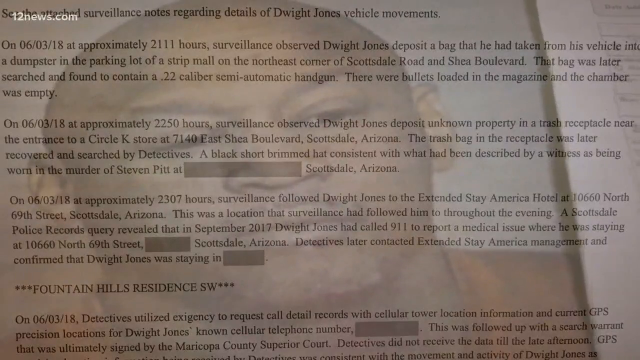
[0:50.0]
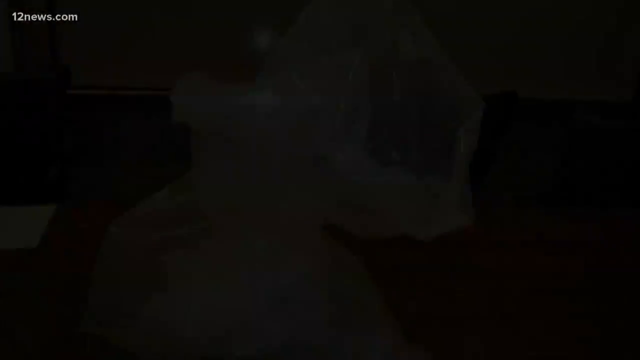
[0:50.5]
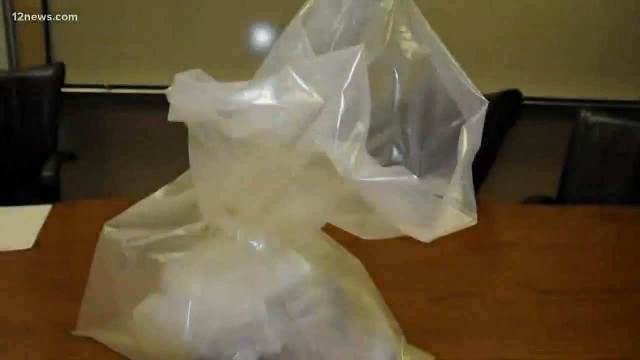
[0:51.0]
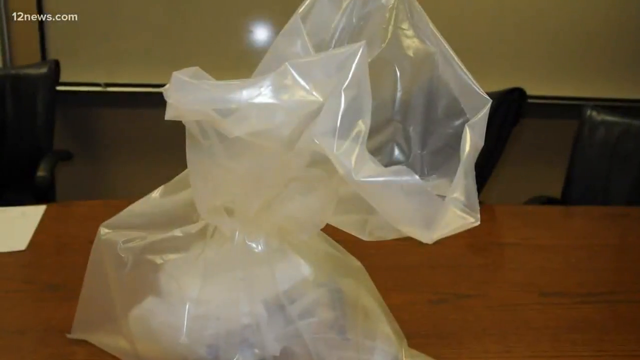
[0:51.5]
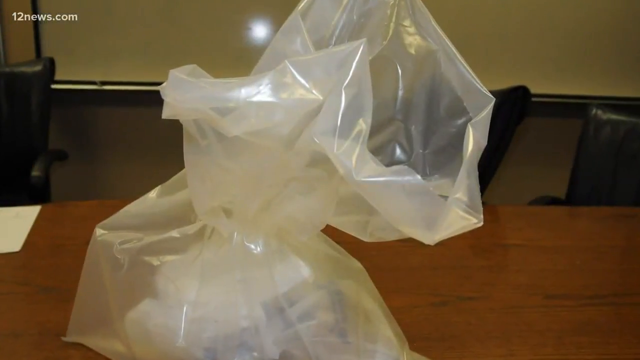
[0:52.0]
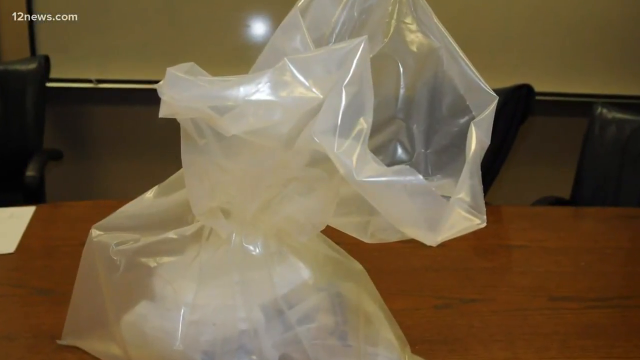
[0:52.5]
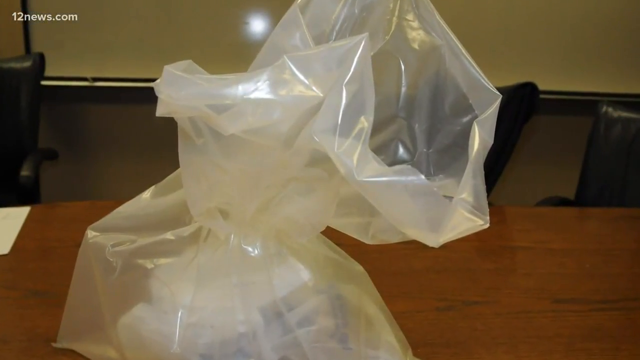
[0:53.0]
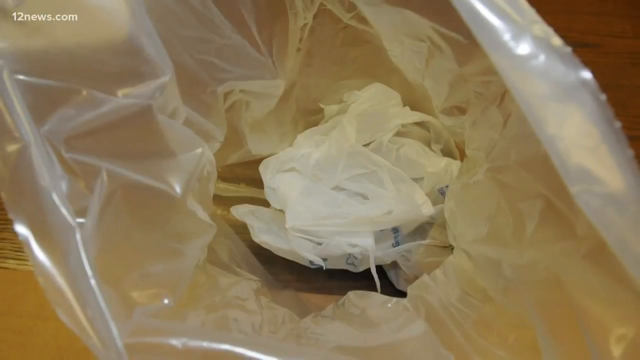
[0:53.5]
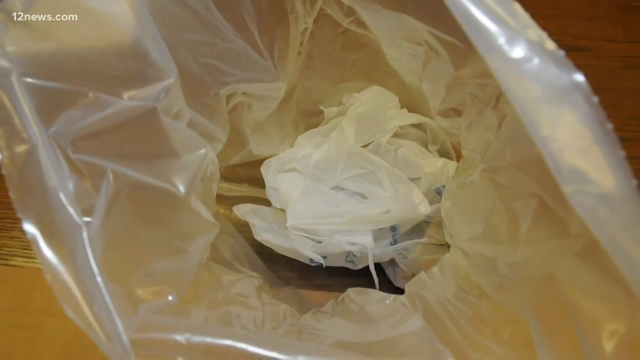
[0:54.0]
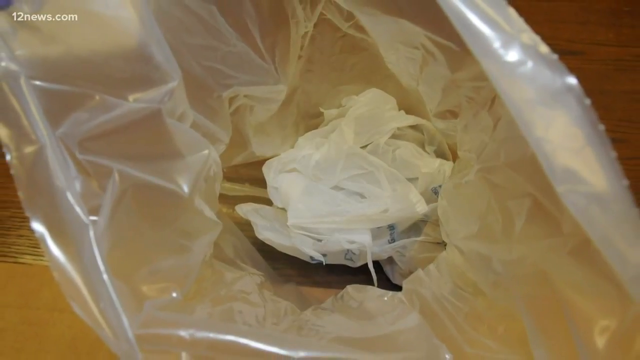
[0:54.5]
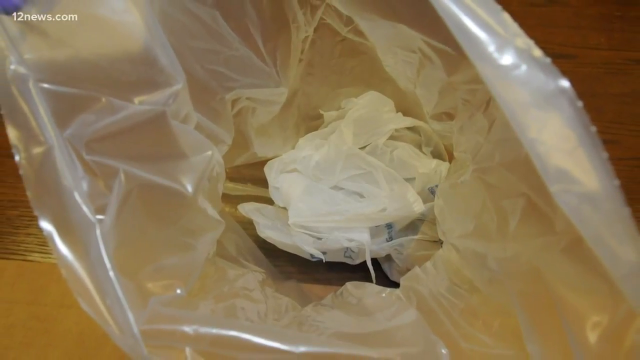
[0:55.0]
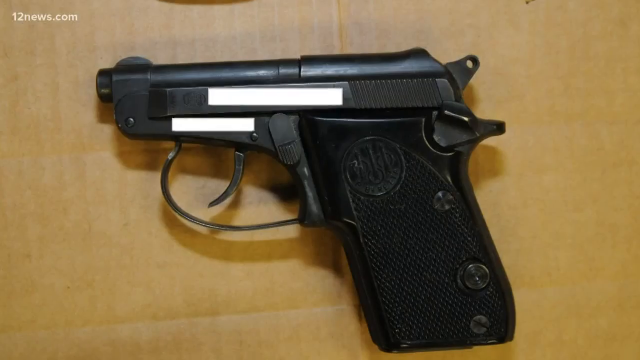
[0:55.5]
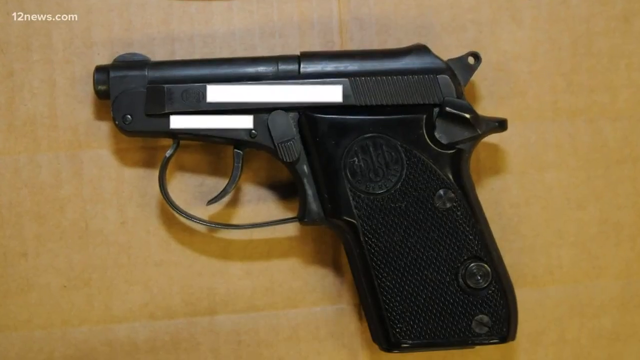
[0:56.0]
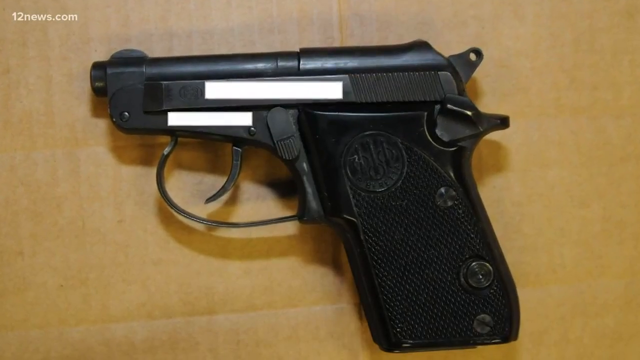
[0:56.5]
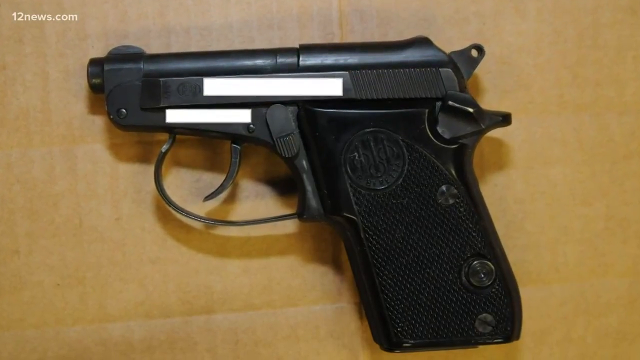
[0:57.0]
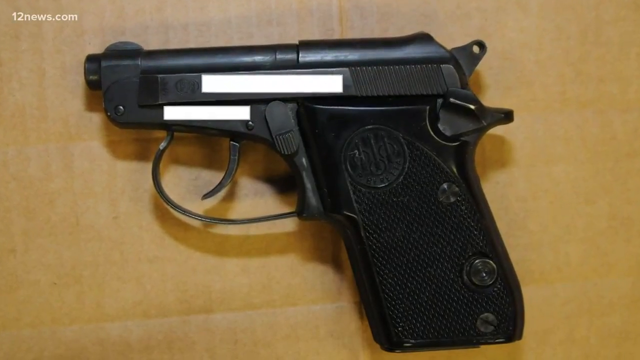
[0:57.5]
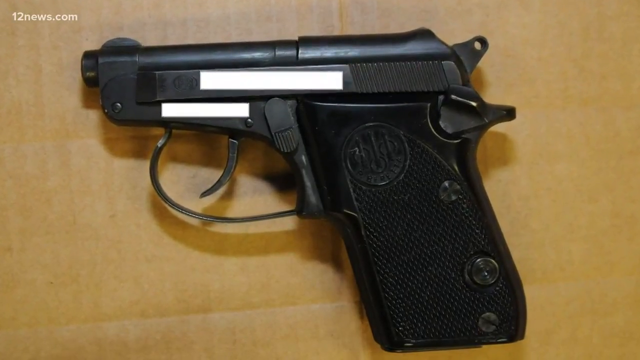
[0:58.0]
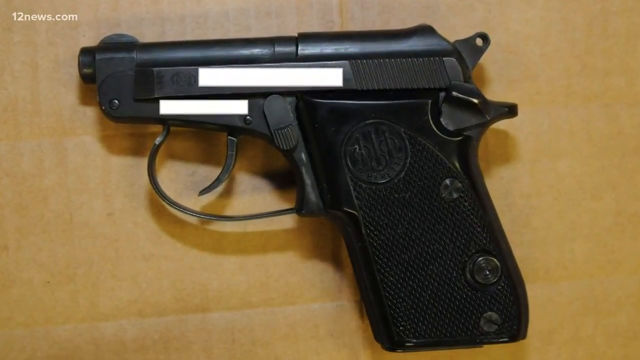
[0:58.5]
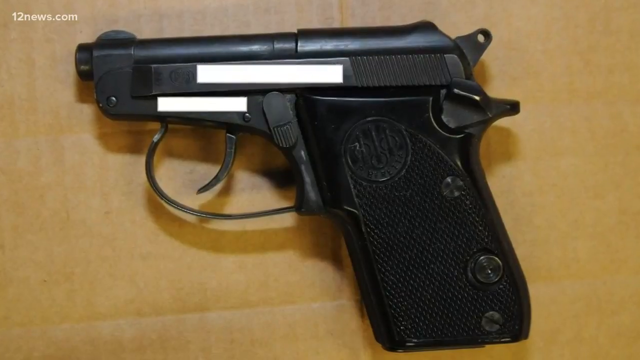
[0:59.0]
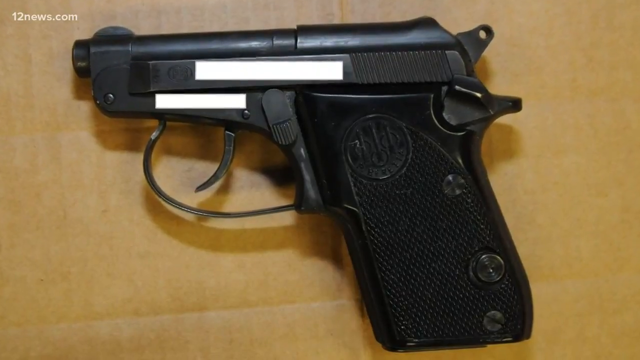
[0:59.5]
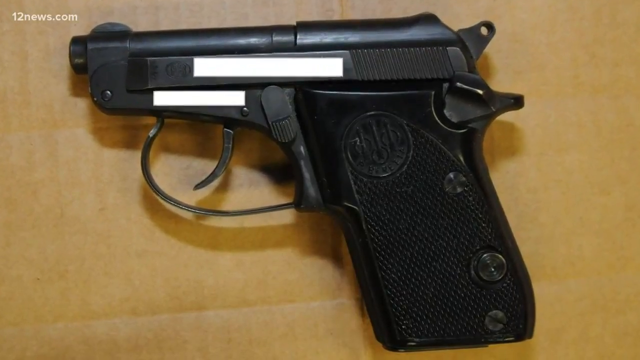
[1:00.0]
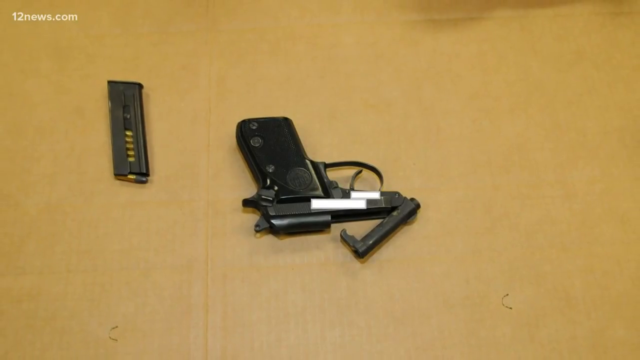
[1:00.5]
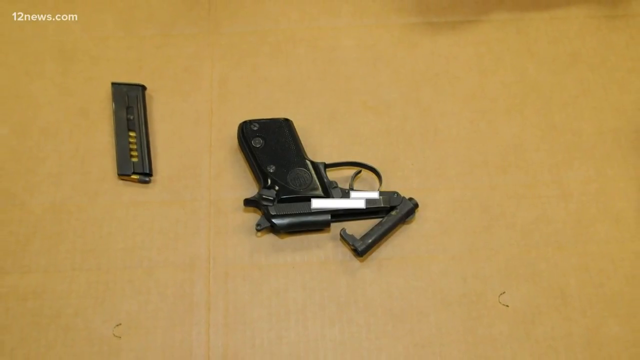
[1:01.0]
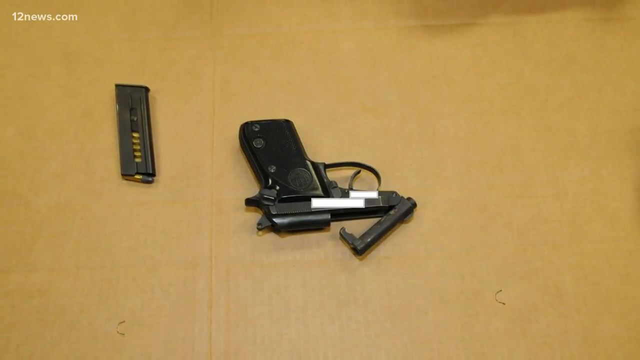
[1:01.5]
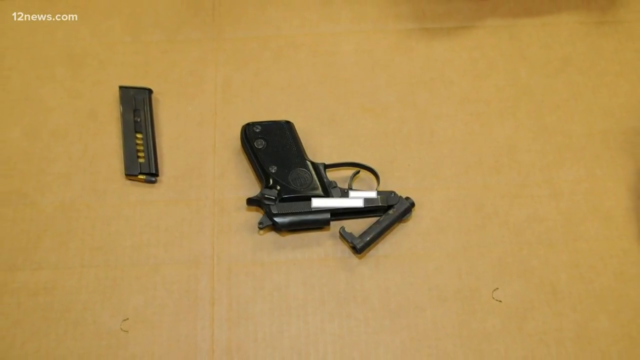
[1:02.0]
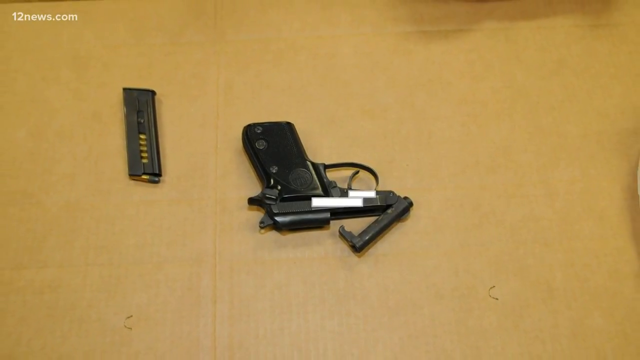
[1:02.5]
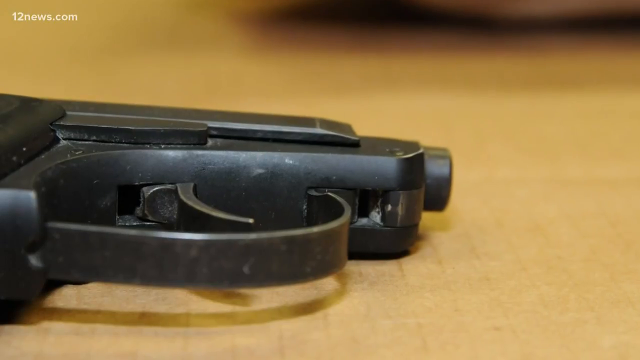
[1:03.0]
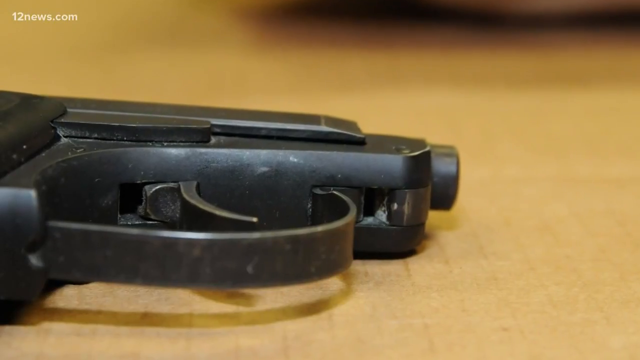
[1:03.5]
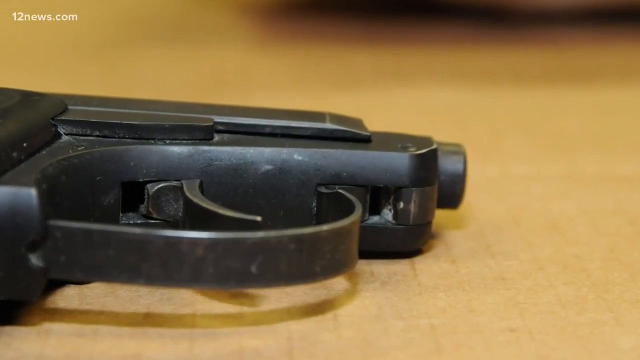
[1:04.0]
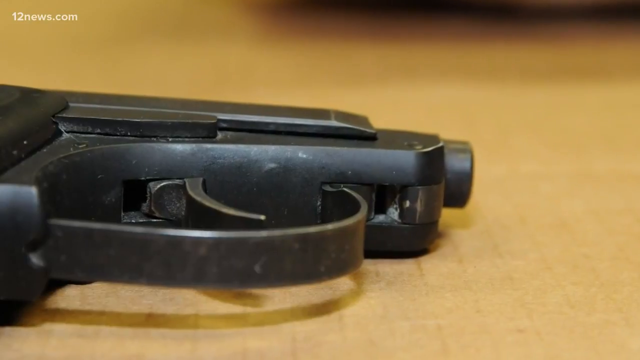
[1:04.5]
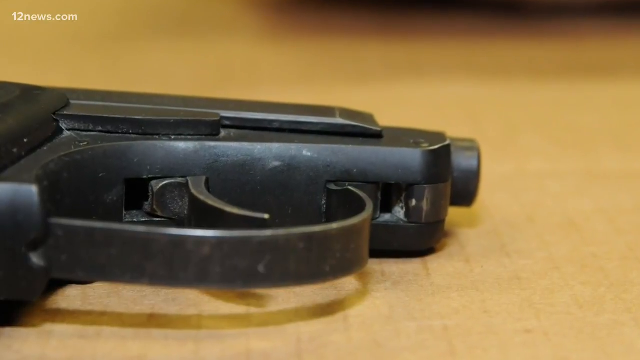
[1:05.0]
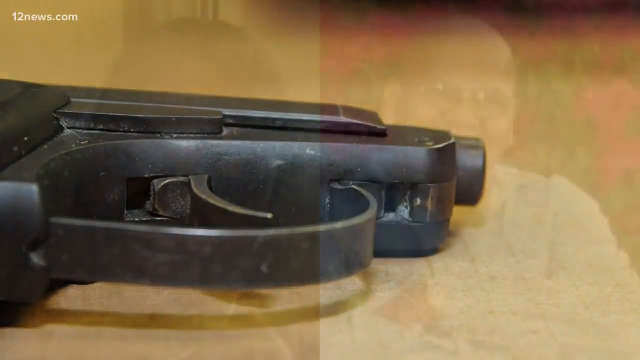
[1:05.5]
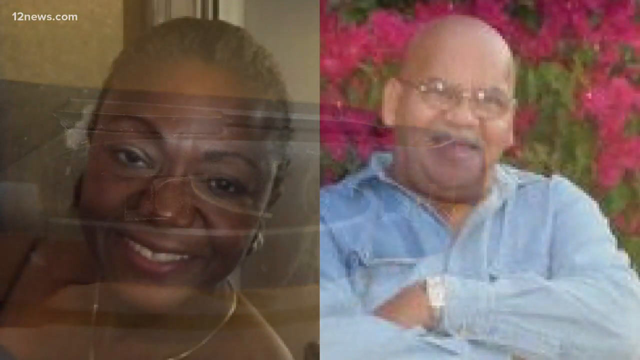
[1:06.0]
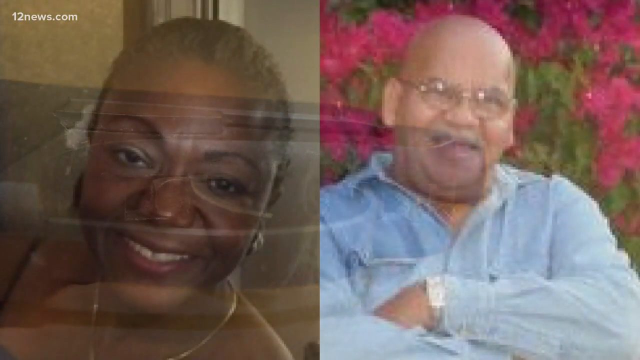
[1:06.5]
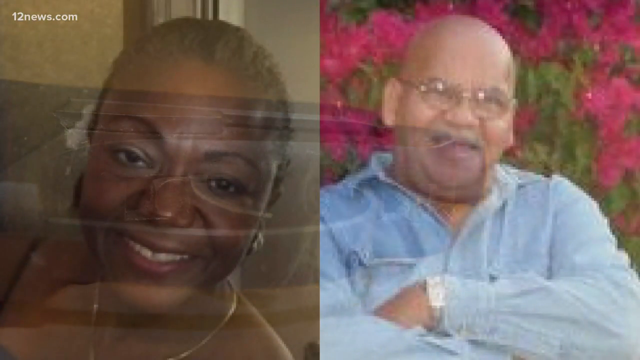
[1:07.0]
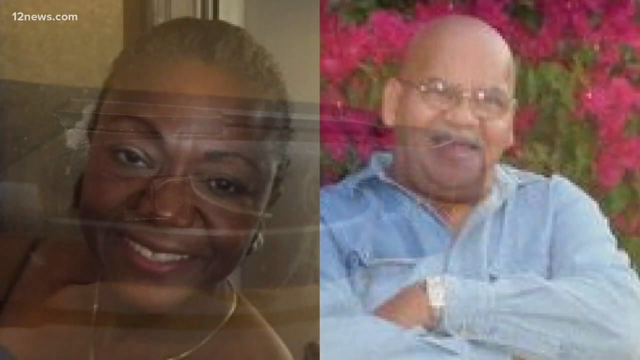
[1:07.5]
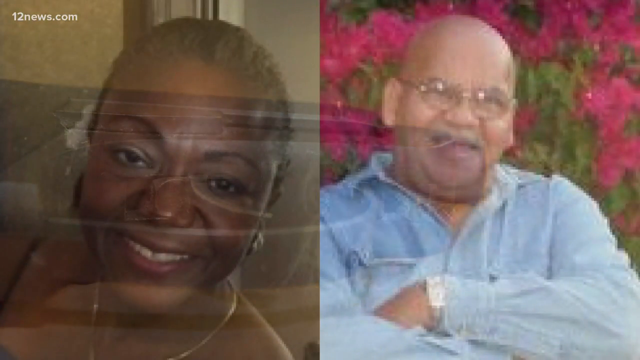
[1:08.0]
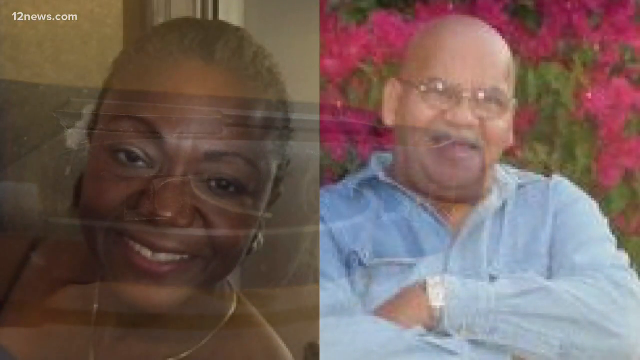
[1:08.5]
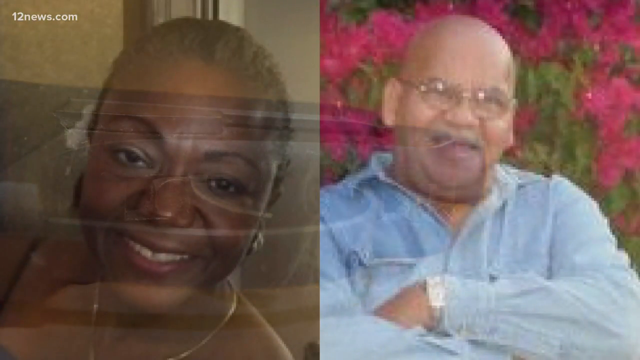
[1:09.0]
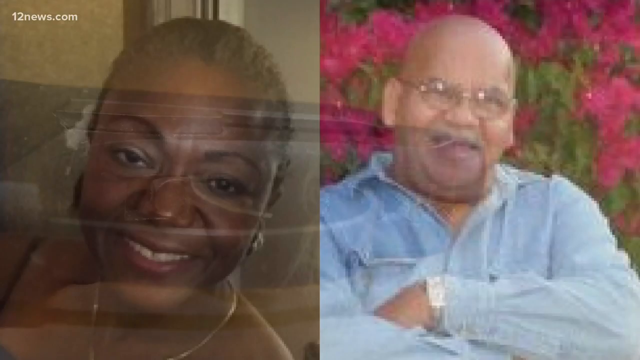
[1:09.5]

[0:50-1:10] The news report opens on what looks like the text of a police report appearing transparent, with a photograph of a man in what looks like a mug shot visible under it. The scene then switches to a large plastic bag sitting on a desk. The next shot shows the bag open, with the camera looking down into it at what look like smaller white bags inside. Next comes an image of a revolver resting on a wooden surface, then another view of the revolver with the bullet clip removed and lying next to the gun on a wooden surface, and a close-up view of the gun. The image then changes to a split screen of photographs: on the left, a photograph of a Black woman; on the right, a photograph of a light-skinned Black man wearing glasses and standing in front of a cluster of bright pink flowers.